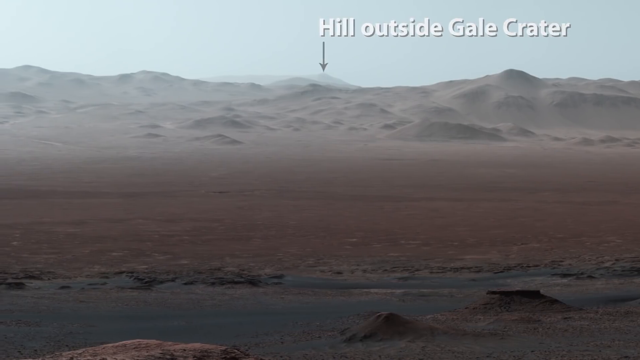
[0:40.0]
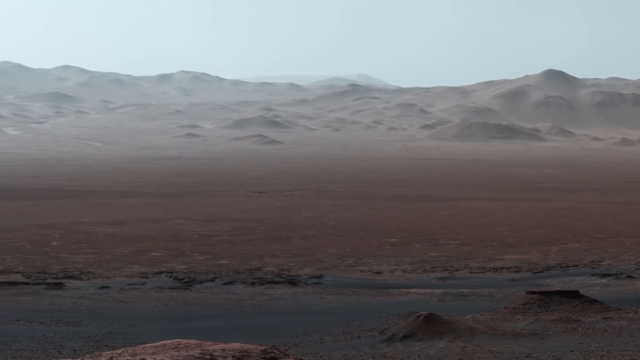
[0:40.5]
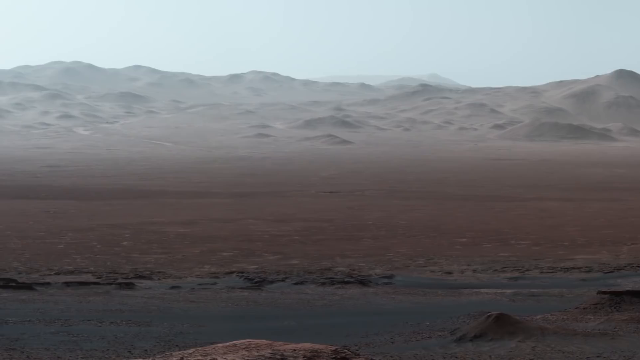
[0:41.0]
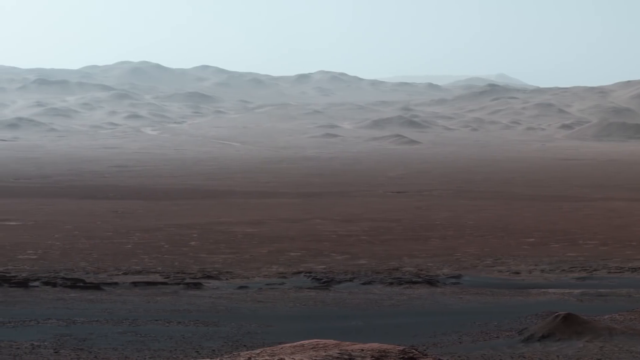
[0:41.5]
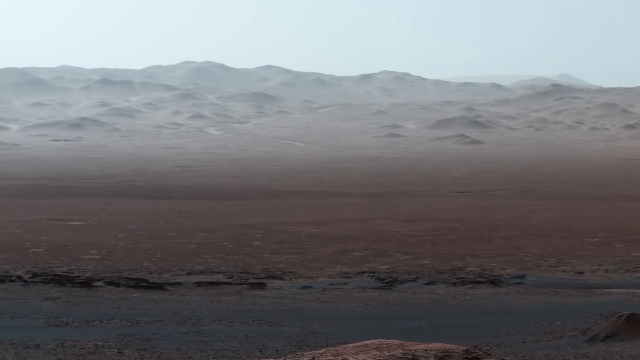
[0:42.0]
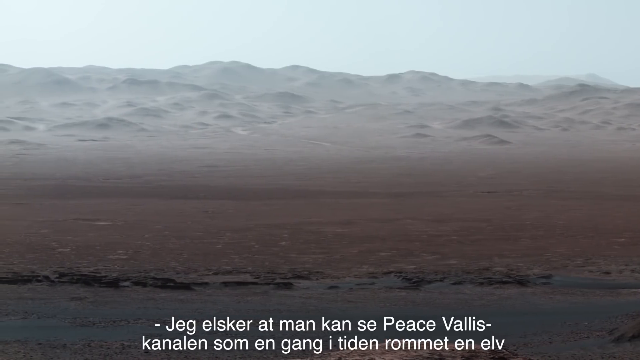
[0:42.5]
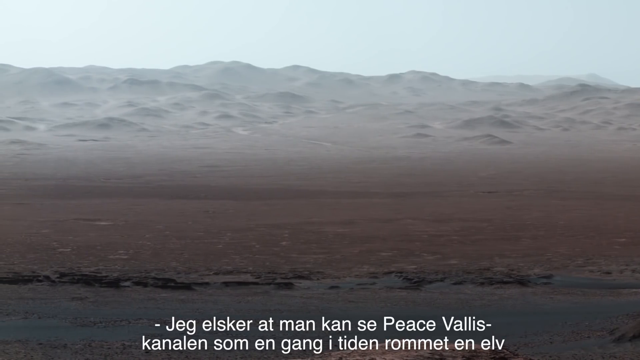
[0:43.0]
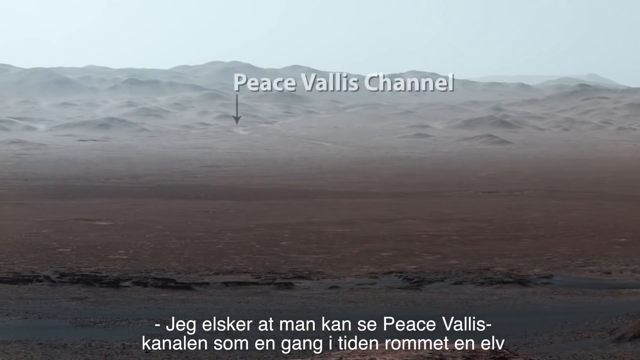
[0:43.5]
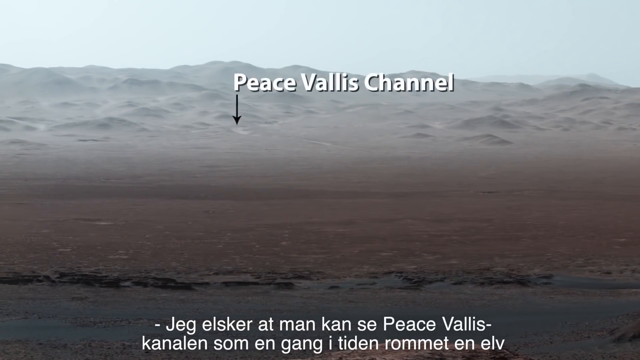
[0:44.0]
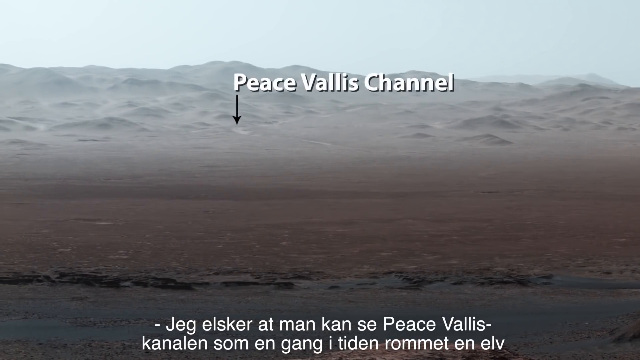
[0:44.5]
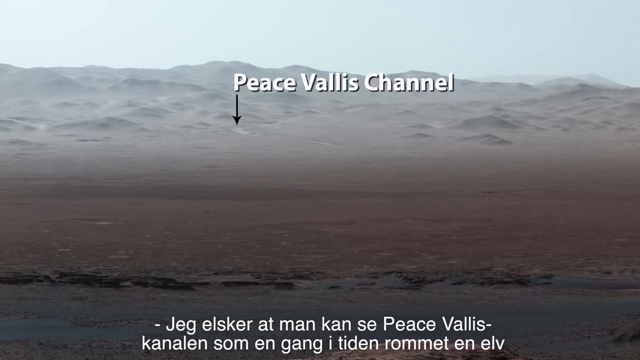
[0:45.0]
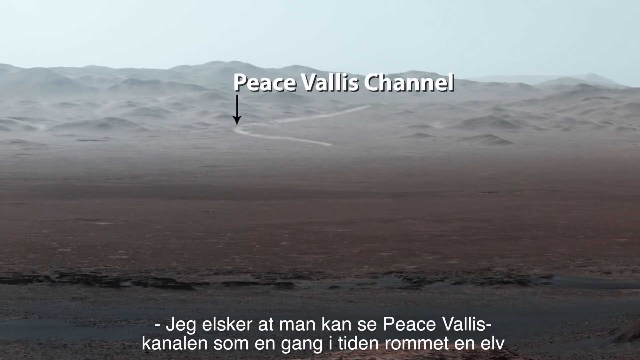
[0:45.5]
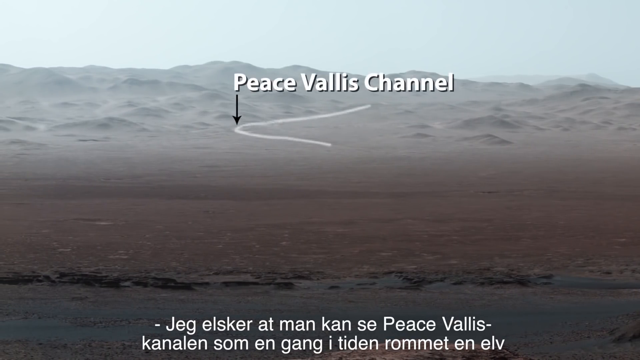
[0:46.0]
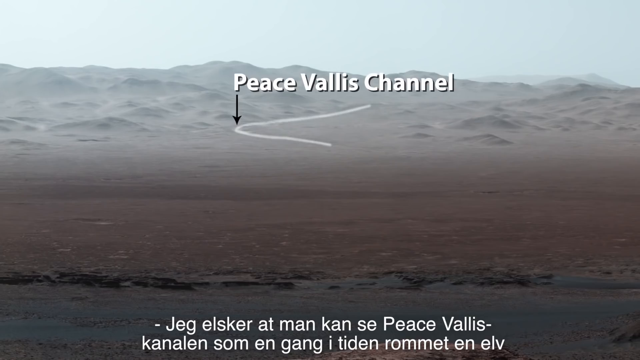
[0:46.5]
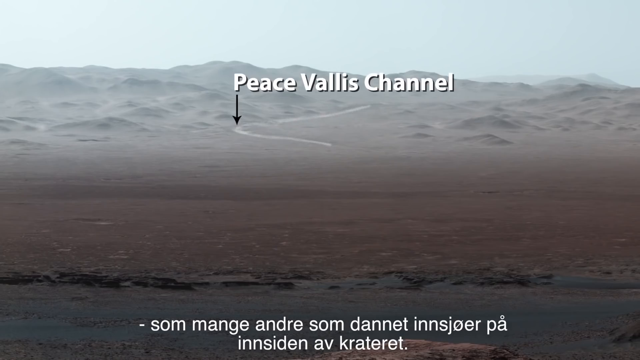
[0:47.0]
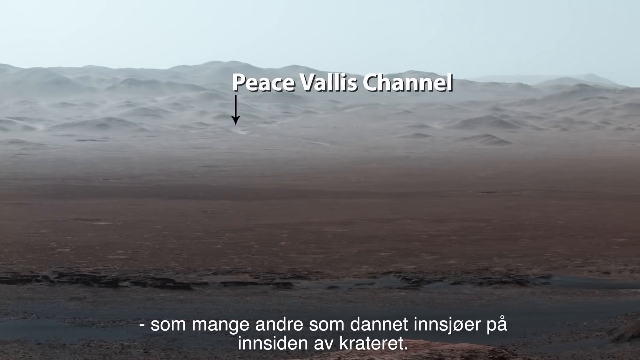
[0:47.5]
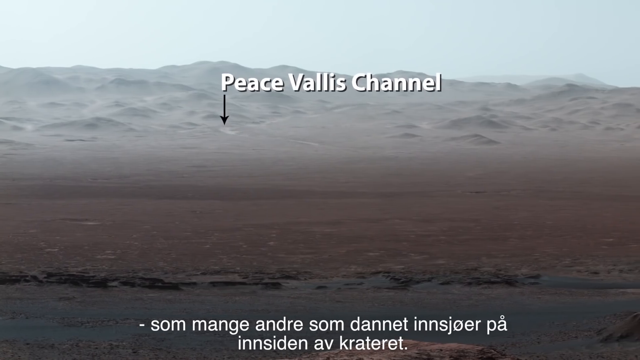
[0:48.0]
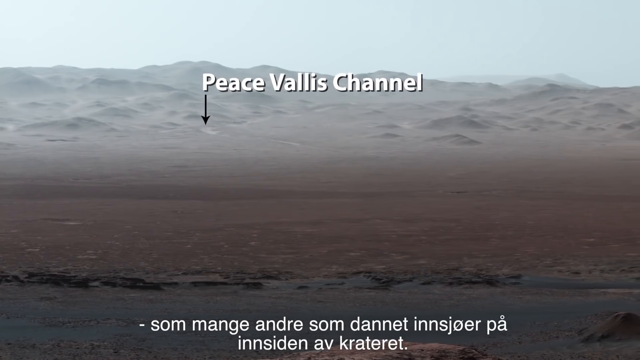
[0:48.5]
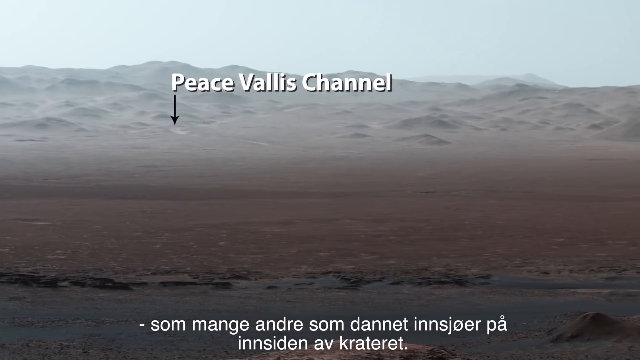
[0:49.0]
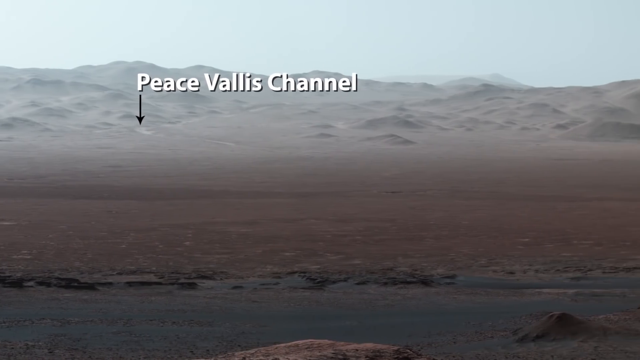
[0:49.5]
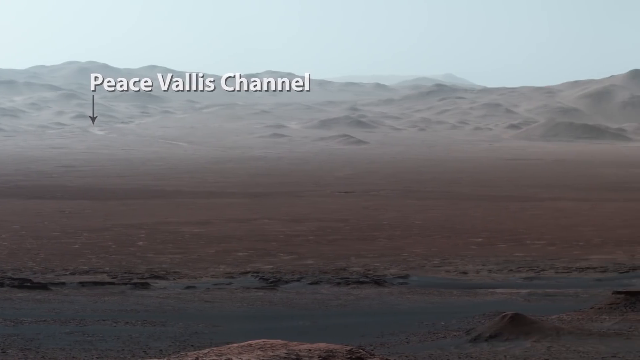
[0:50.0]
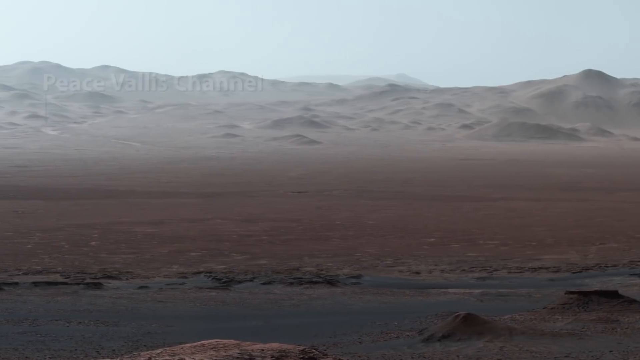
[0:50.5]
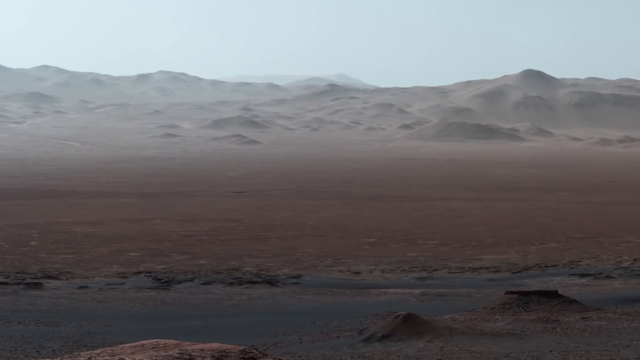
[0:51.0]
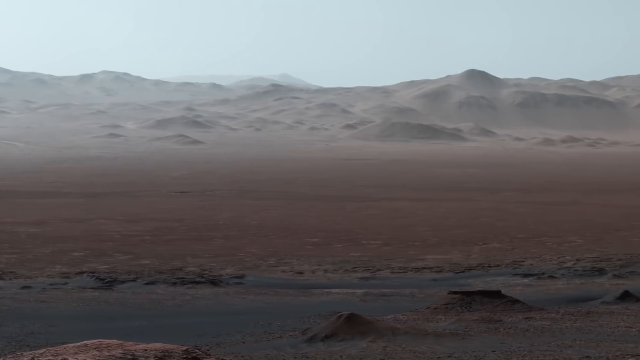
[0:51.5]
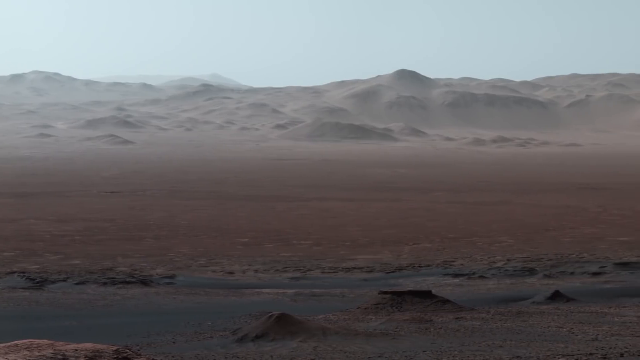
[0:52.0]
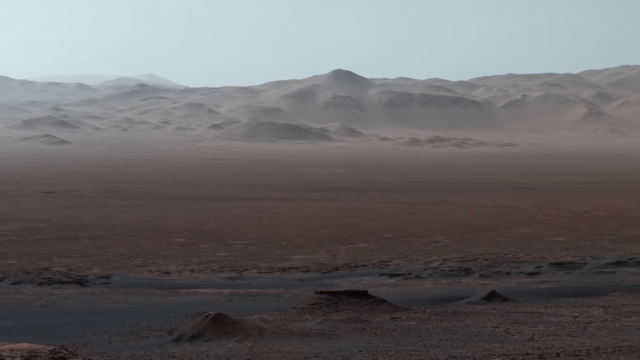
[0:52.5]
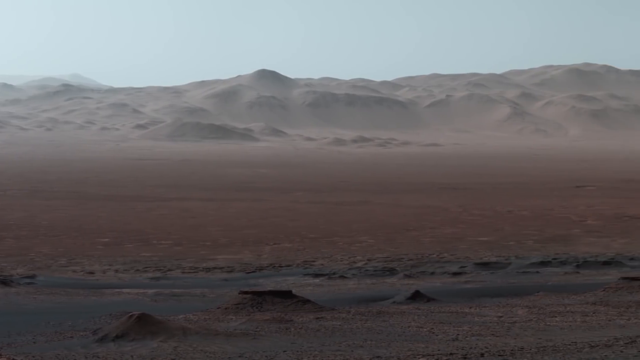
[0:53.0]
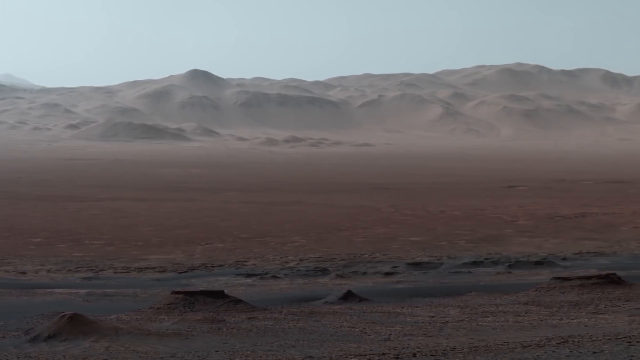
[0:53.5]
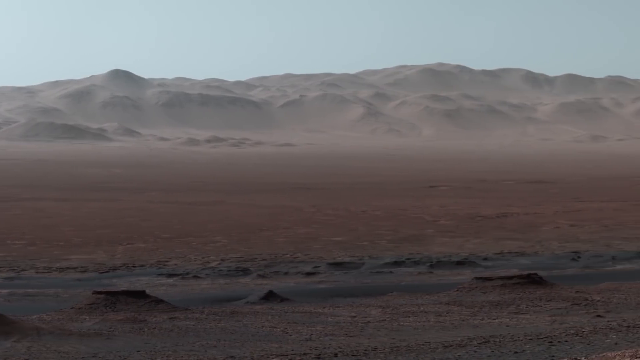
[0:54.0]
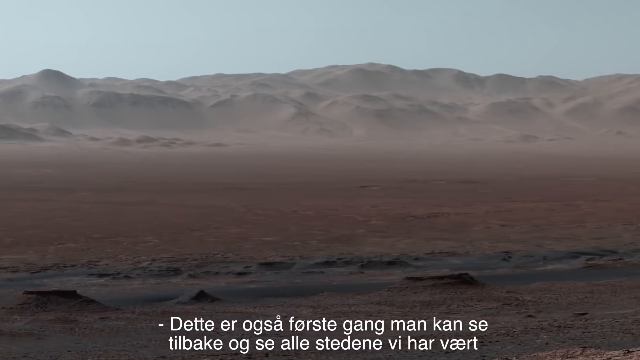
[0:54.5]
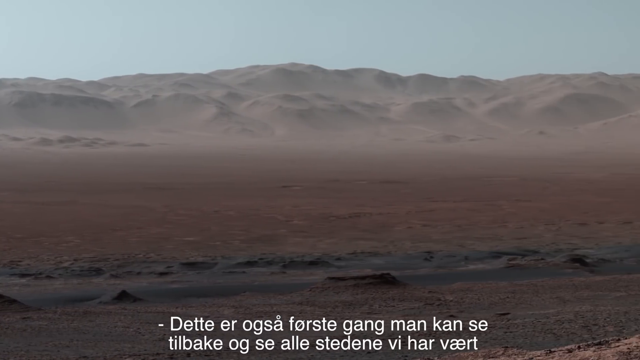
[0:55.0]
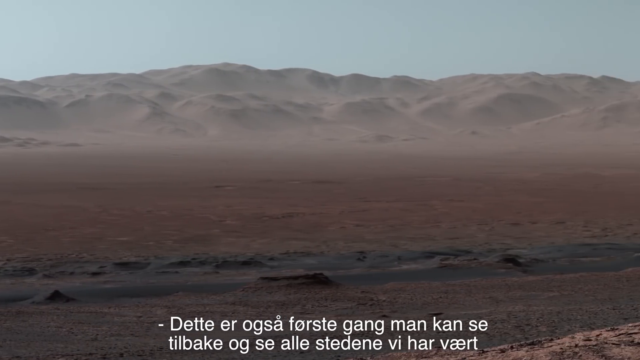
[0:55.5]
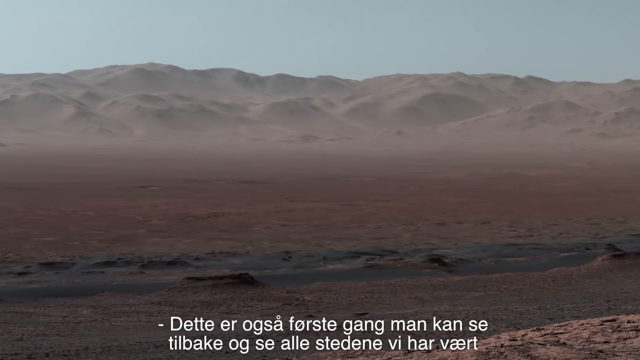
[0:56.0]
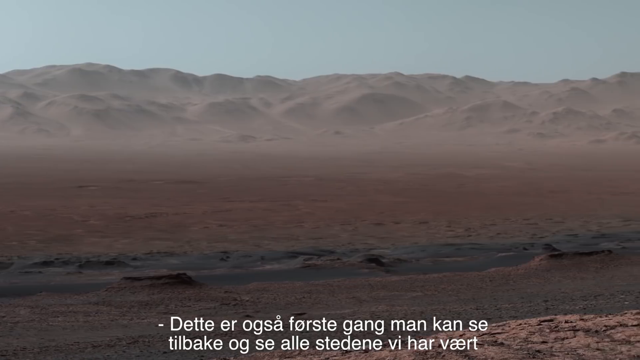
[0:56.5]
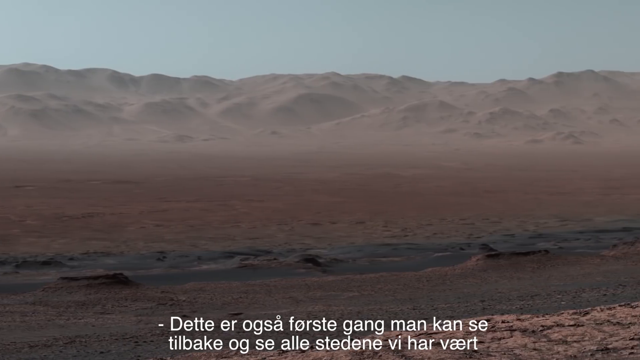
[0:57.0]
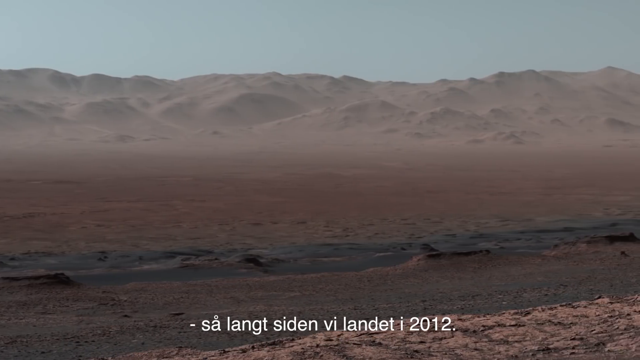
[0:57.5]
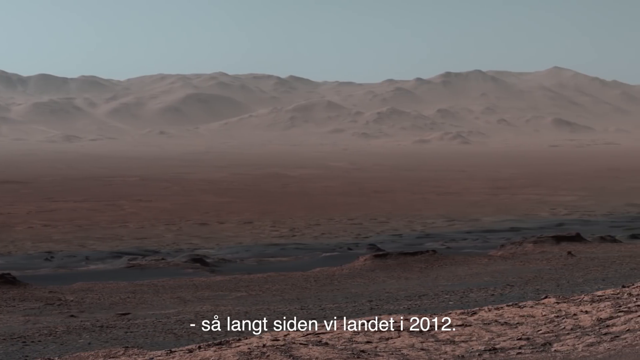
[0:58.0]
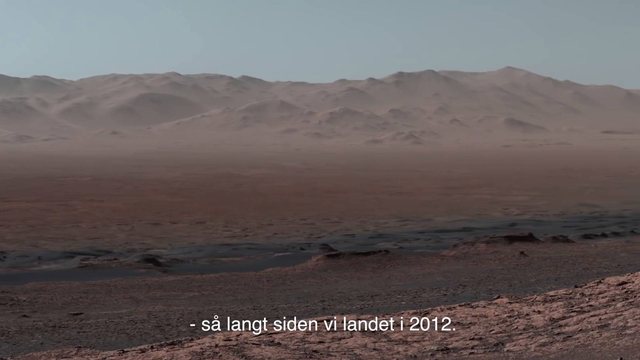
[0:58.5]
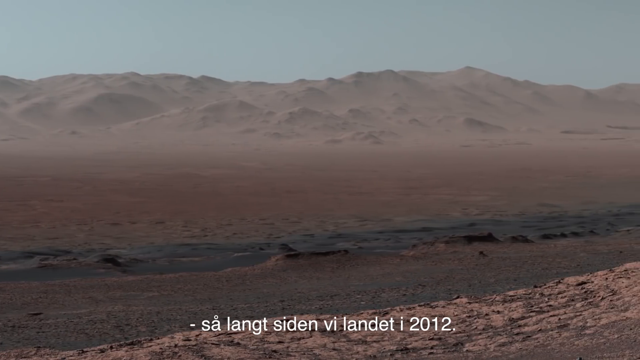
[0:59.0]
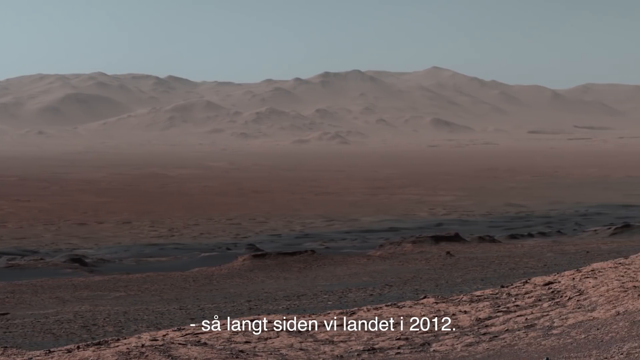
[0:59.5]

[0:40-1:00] A mountainous area has a somewhat gray cast, with many bumpy areas and a bit of a gray-blue sky. The ground has a lot of dirt and some craters, and it is wet and muddy. The camera moves toward the left and stops. Text appears at the bottom, mostly in another language, though words like "man" and "peace" are visible. White text reading "Peace Vallis Channel" appears with a black arrow, and a small section lightens up with a white line. More text pops up at the bottom, and the camera moves toward the right somewhat fast. Additional text at the bottom includes words like "gang" and "man" and the year "2012".